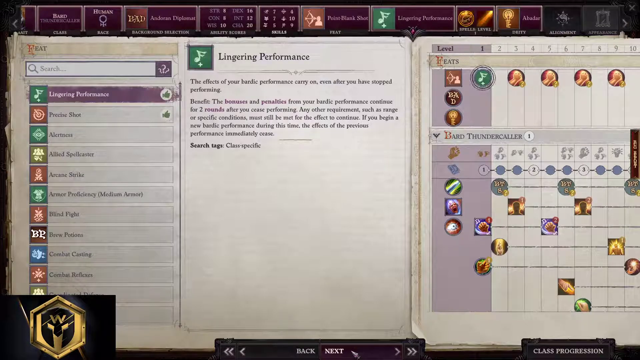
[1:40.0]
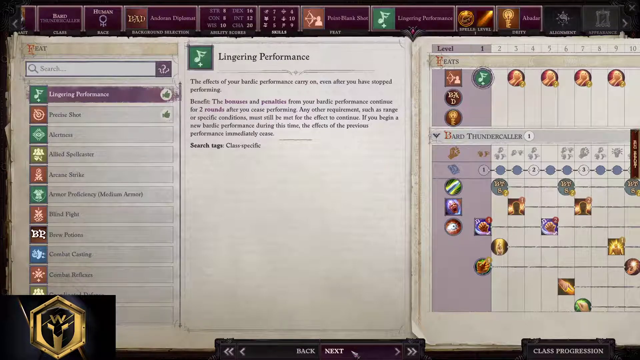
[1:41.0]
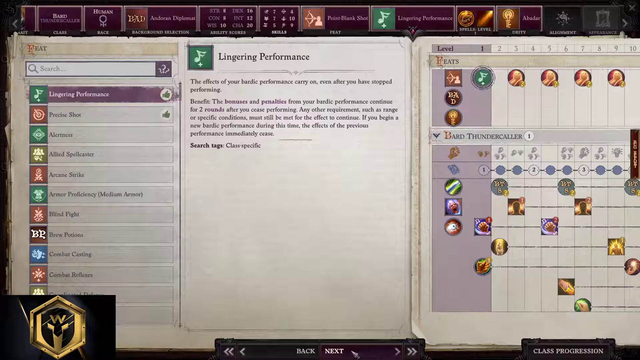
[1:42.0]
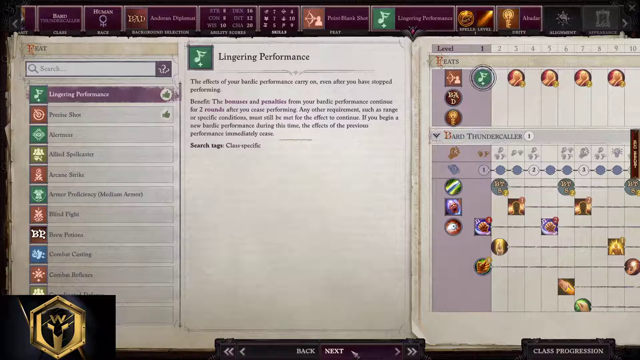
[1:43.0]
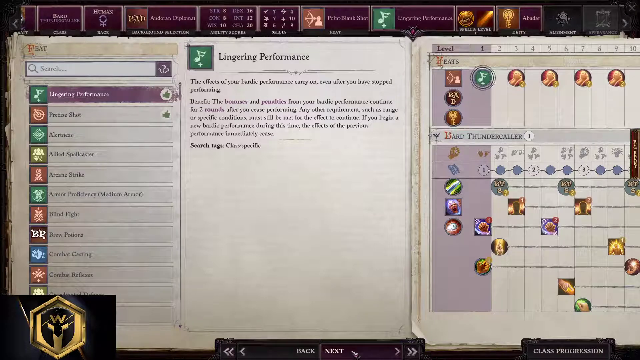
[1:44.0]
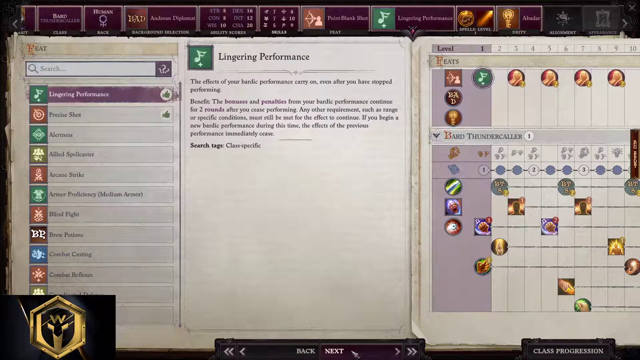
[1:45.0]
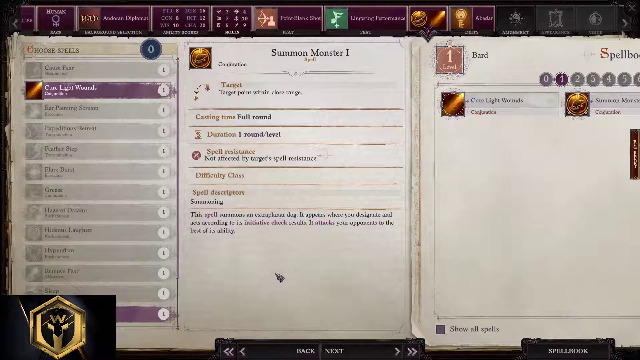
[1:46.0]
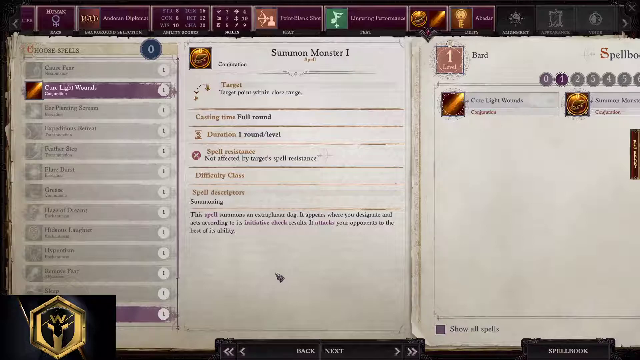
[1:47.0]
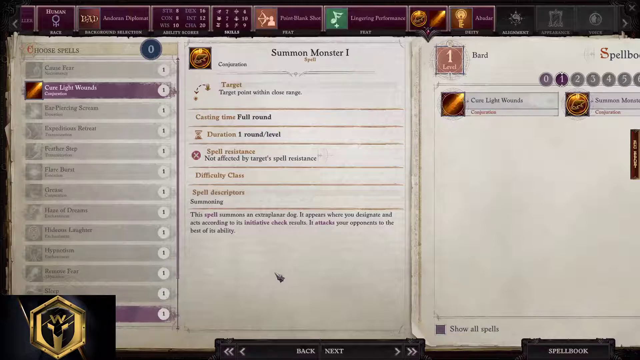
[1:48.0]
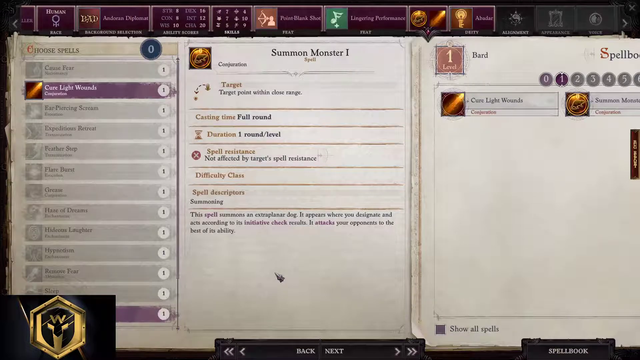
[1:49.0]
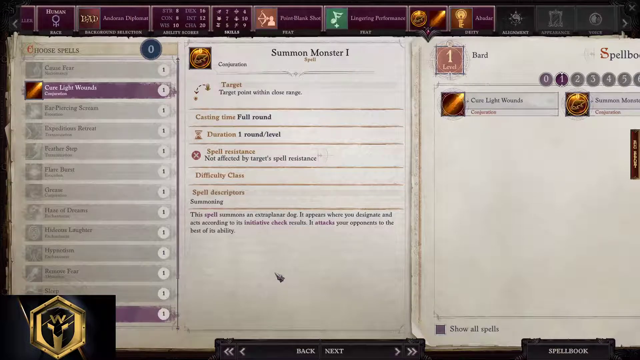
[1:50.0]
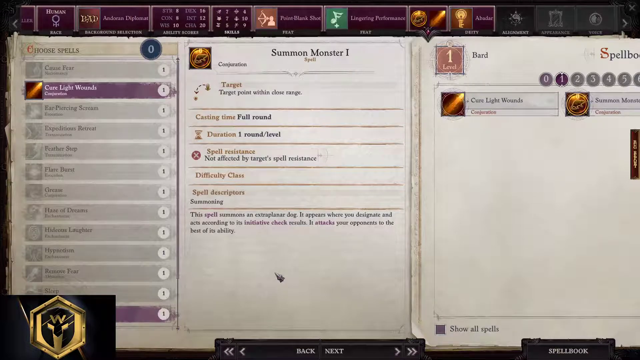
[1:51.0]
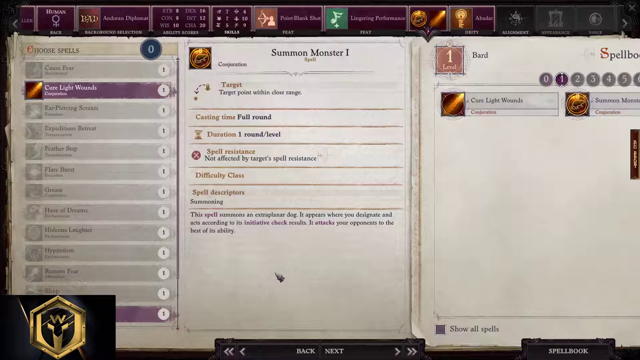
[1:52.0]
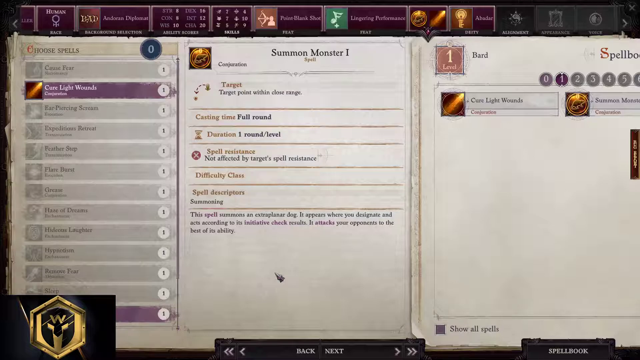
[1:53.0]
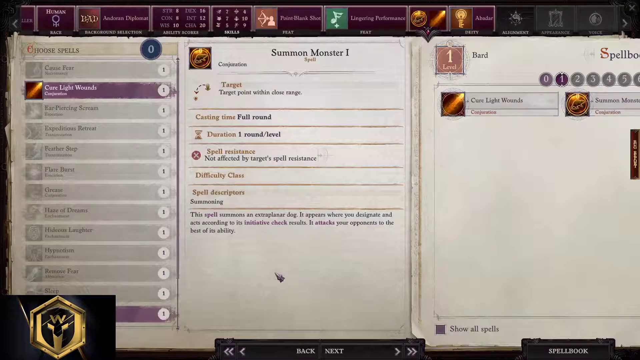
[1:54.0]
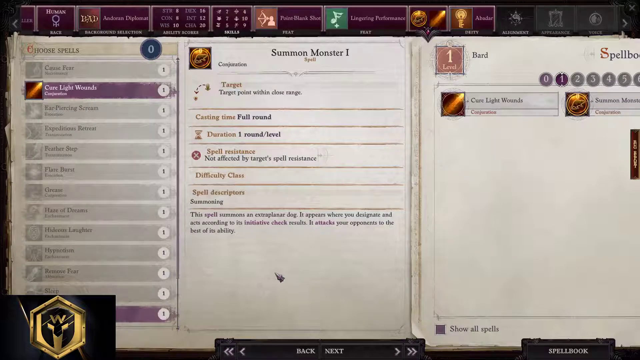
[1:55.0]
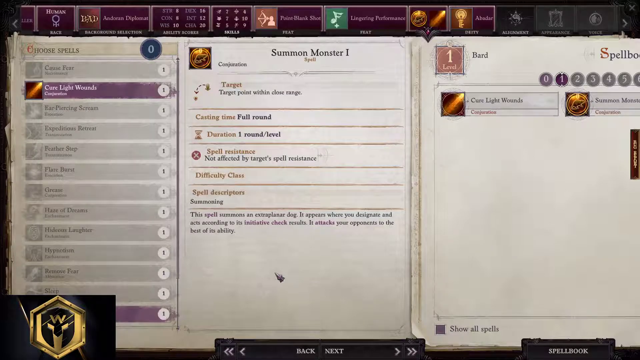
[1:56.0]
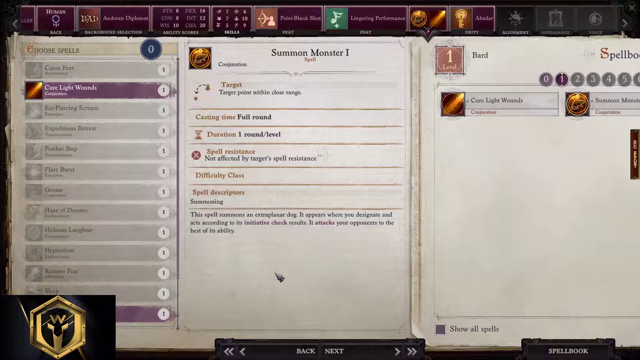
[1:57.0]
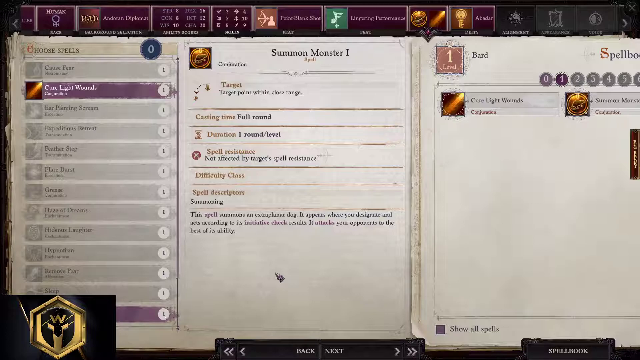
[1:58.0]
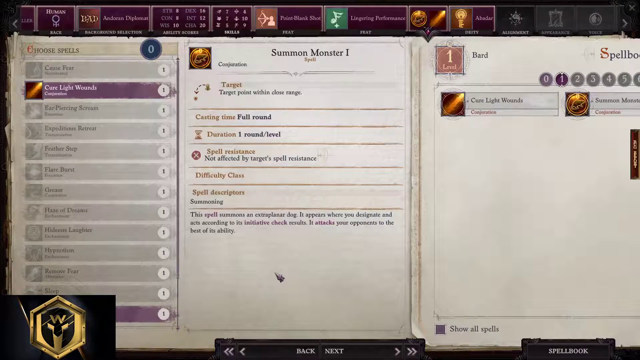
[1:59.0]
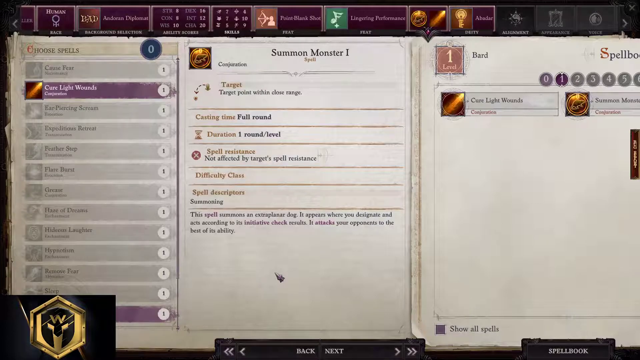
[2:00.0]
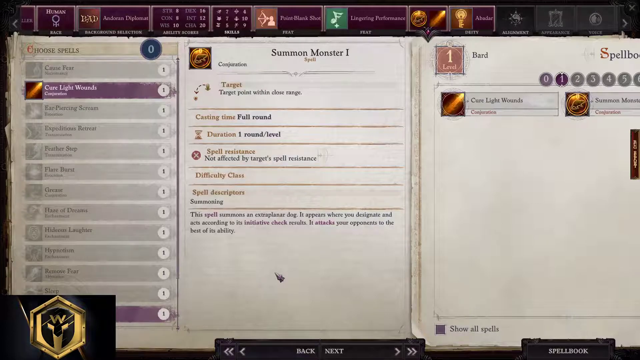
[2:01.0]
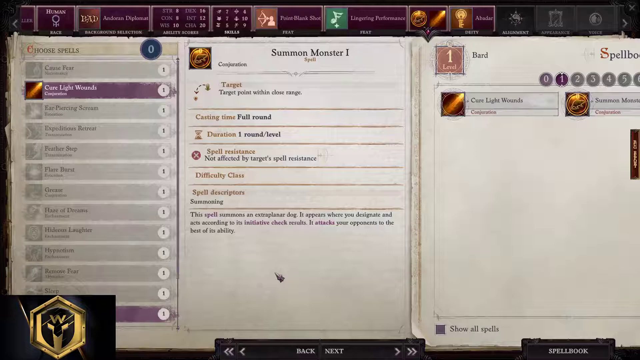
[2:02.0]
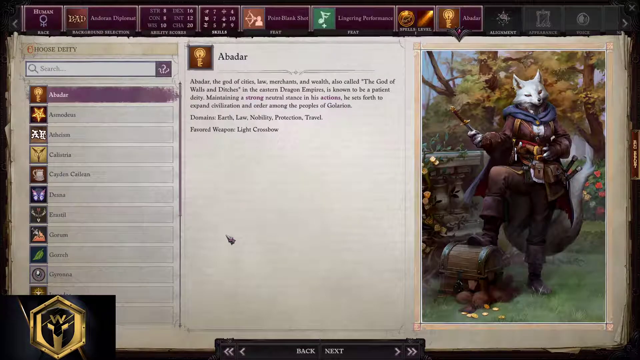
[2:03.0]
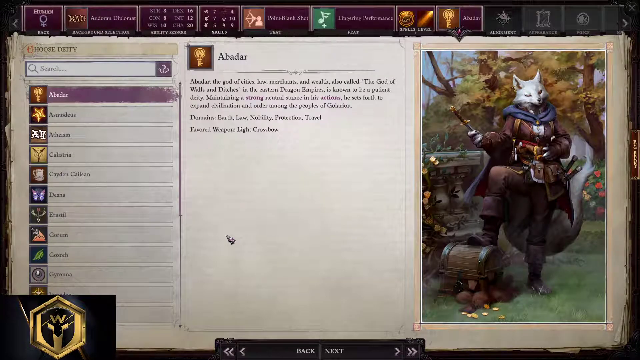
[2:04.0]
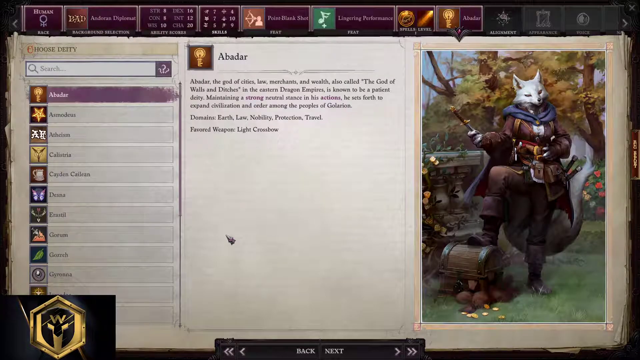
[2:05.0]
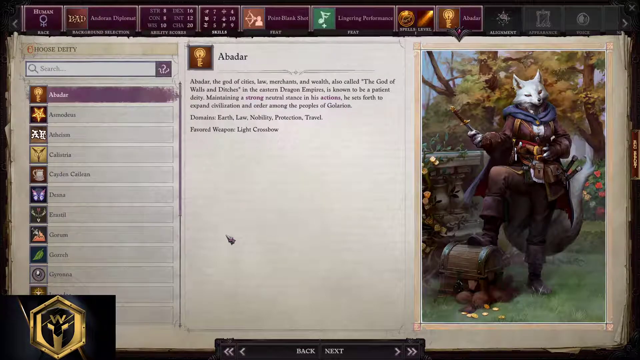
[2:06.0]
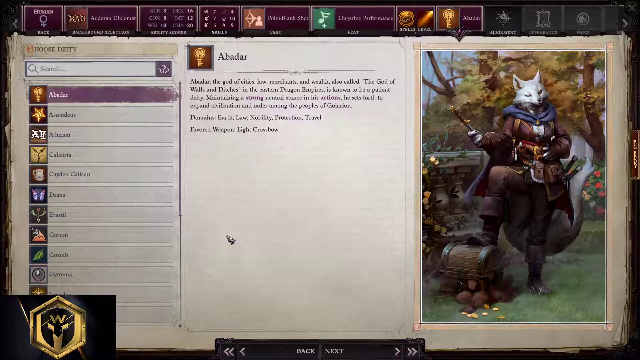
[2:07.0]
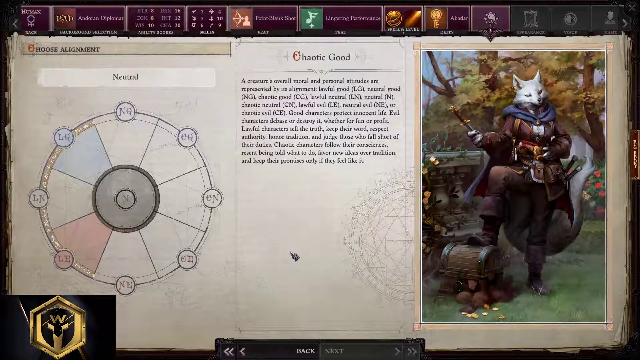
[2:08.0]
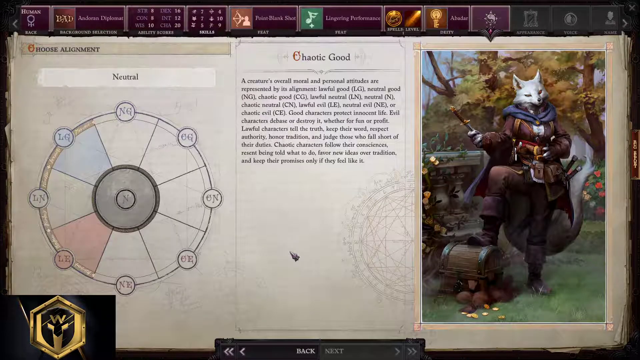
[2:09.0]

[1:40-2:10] The left side of the game screen lists lingering performance, precise shot, alertness, allied spellcaster, arcane strike, armor proficiency medium armor, blind fight, brew potions, combat casting and combat reflexes, with lingering performance highlighted in purple. Next to the list, text reads "Lingering performance: the effects of your bardic performance carry on even after you have stopped performing. Benefit: the bonuses and penalties from your bardic performance continue for two rounds after you cease performing. Any other requirements such as range or specific conditions must still be met for the effect to continue. If you begin a new bardic performance during this time the effects of the previous performance immediately cease." Below it reads "search tags: class specific".